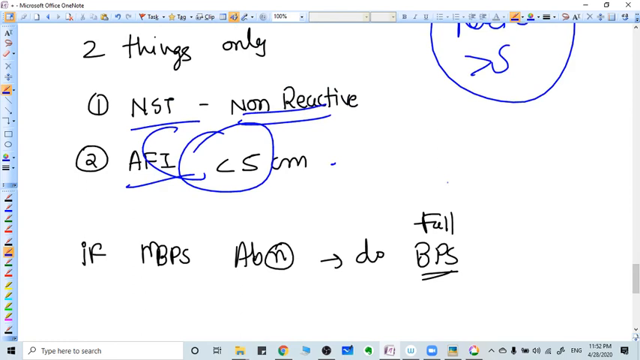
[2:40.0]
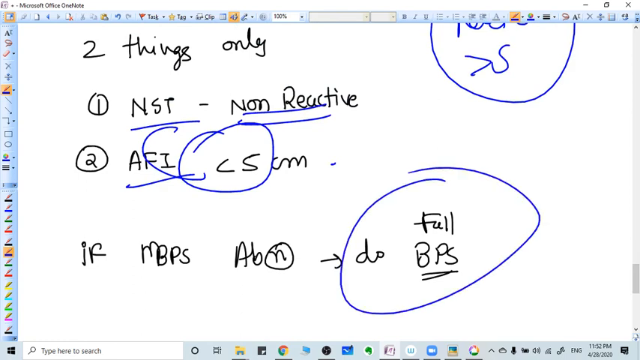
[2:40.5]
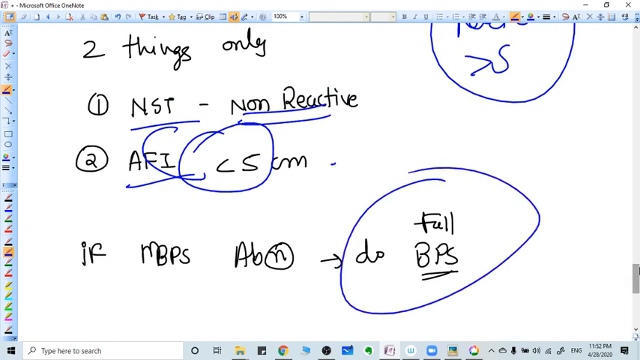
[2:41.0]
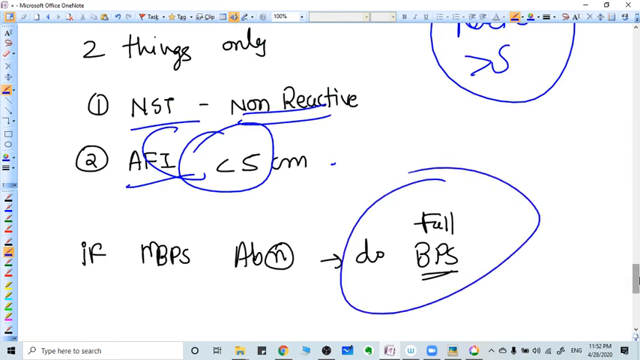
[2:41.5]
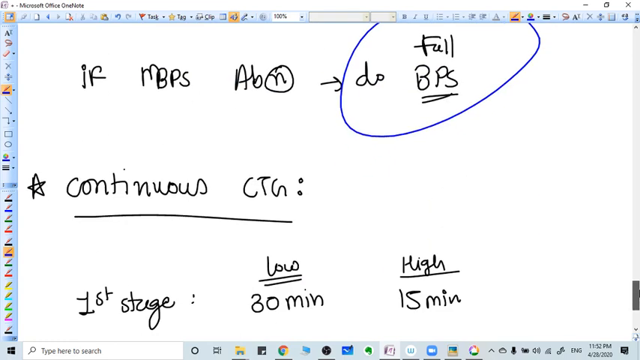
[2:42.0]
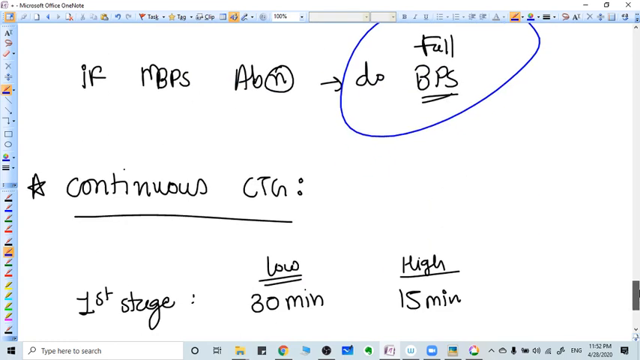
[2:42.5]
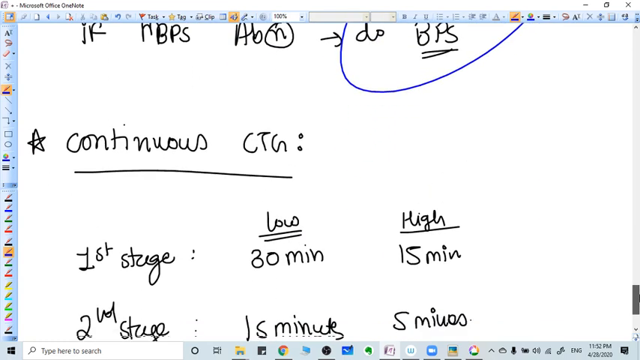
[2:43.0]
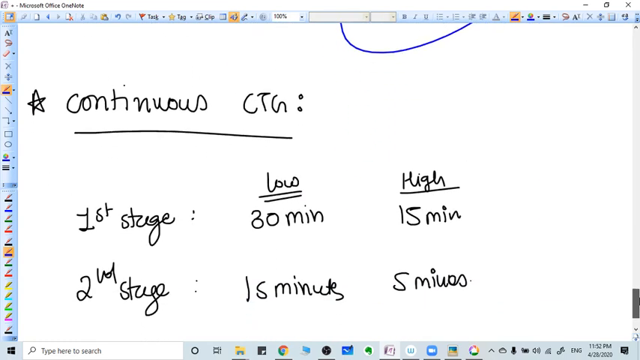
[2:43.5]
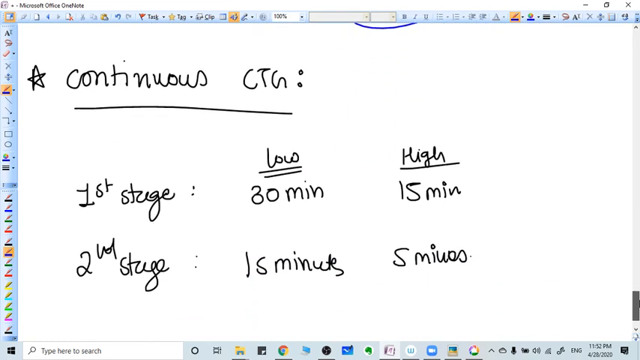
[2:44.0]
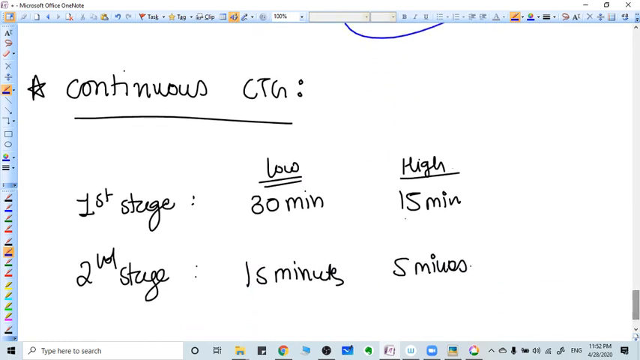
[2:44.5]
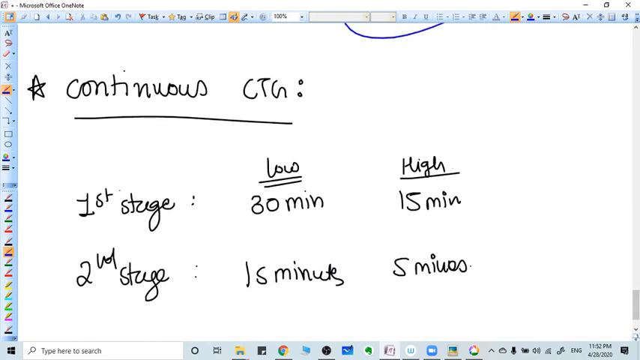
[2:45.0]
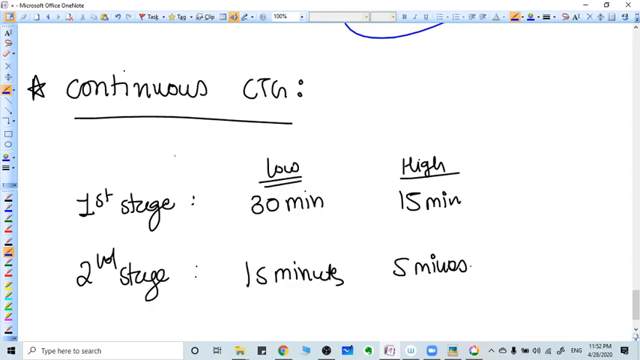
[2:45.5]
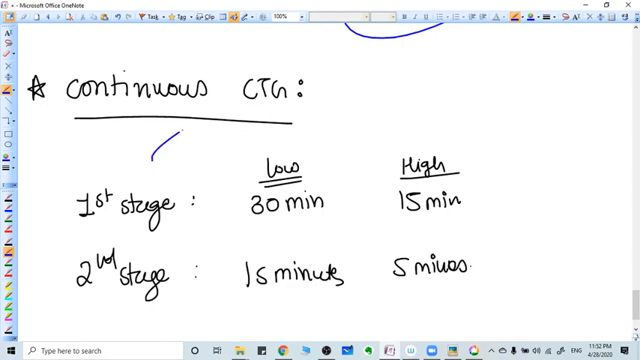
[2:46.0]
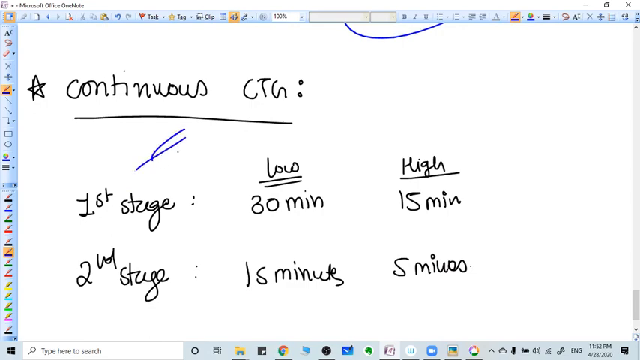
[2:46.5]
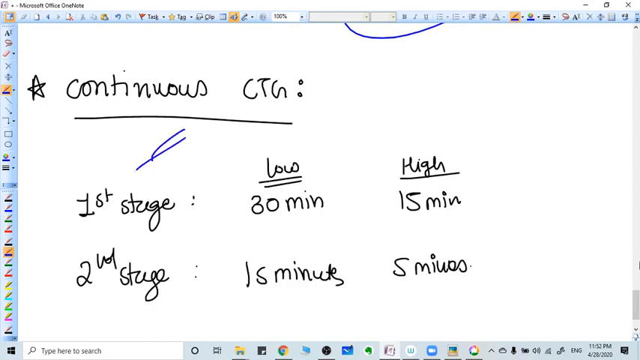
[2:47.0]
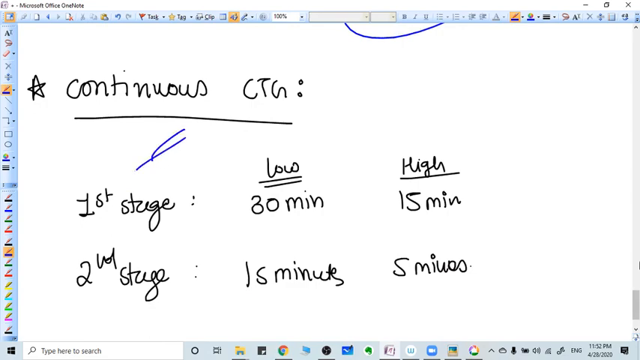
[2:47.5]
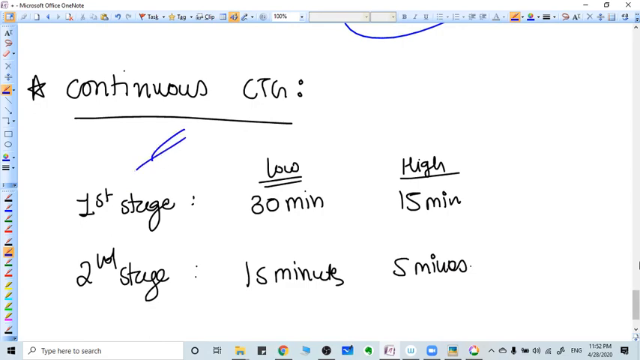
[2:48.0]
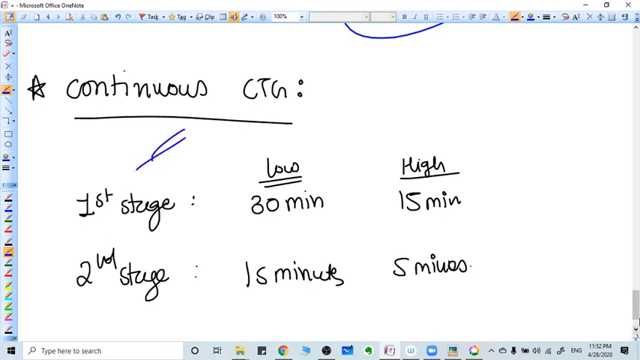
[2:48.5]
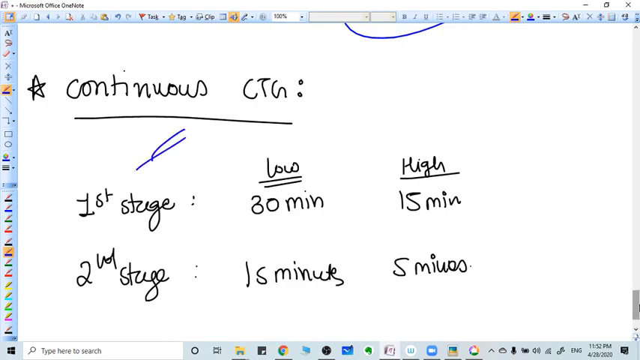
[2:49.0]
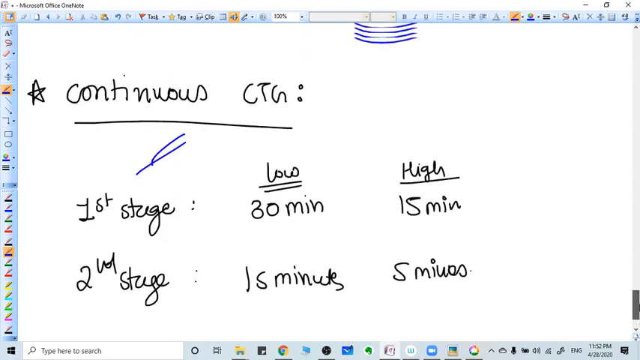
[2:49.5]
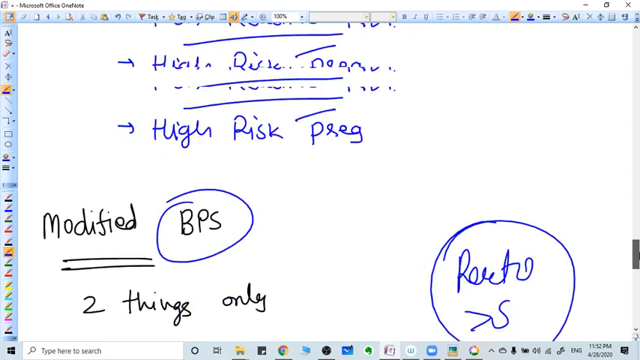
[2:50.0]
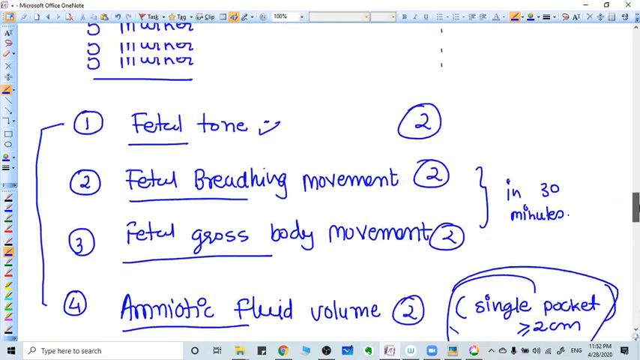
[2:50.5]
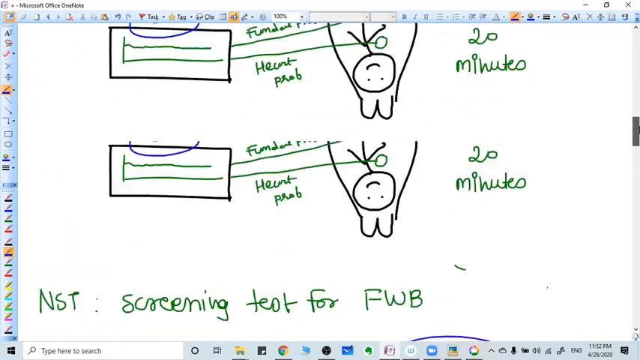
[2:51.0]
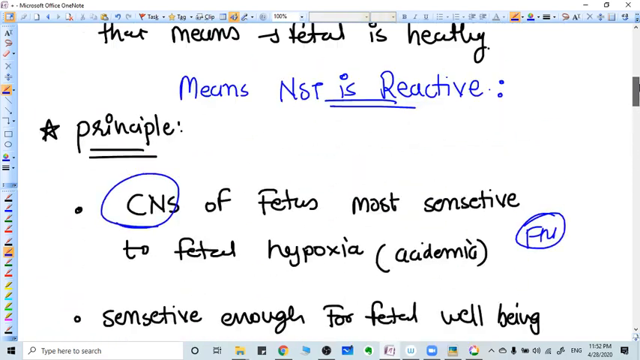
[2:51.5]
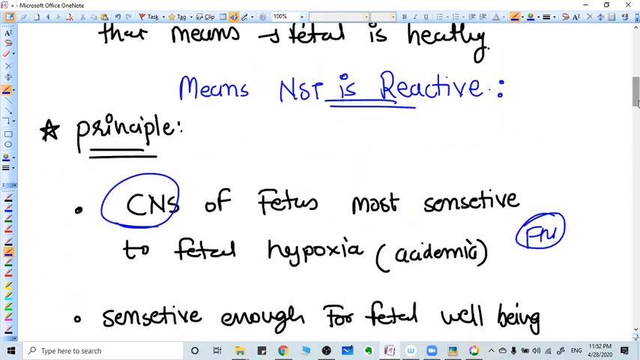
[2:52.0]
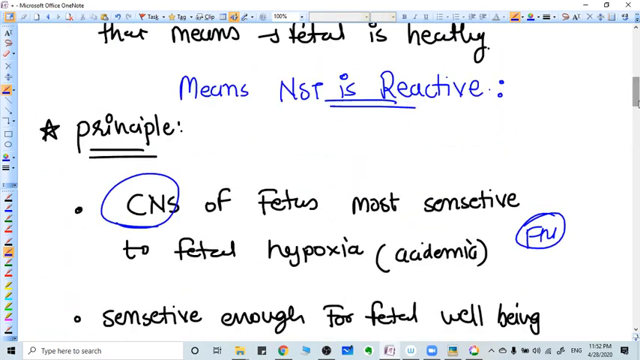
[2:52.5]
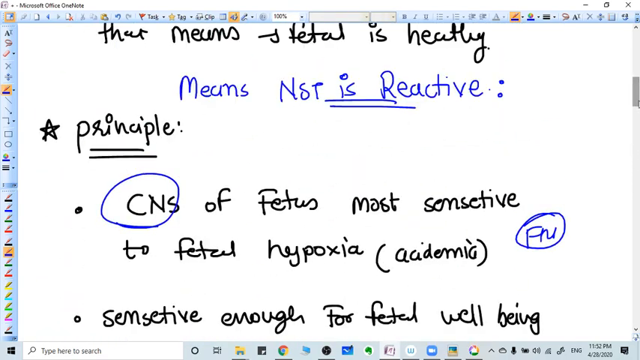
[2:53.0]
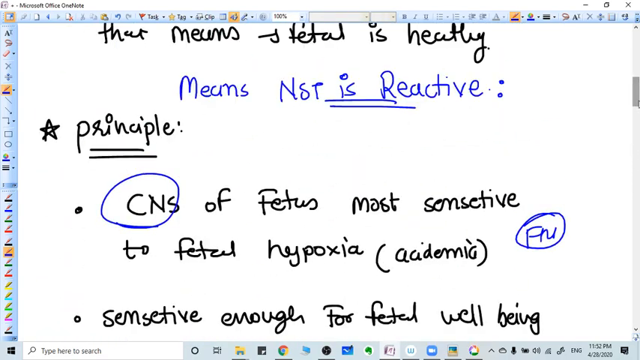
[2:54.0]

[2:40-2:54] The view is at the bottom, where it says "do full BPS," and the person circles it with a large blue circle. The page scrolls down to the part that says "* continuous CT:". The next lines of the notes say "first stage" and "second stage," each with a low and a high value: the first stage is 30 minutes for low and 15 minutes for high, and the second stage is 15 minutes for low and five minutes for high. The minutes are abbreviated in most cases. The page then scrolls all the way back up to the top.